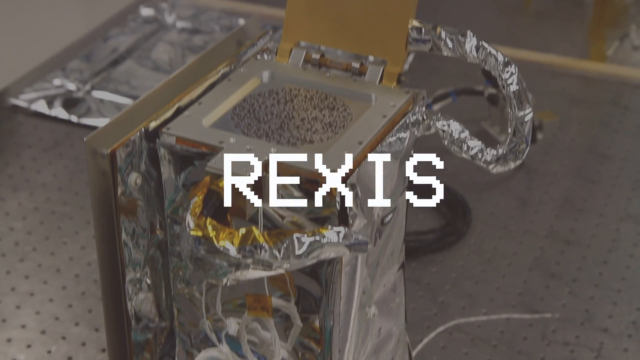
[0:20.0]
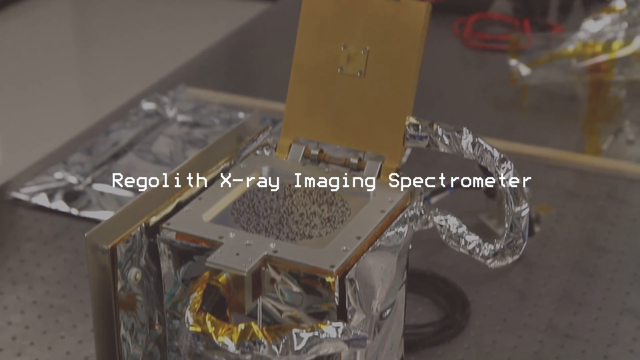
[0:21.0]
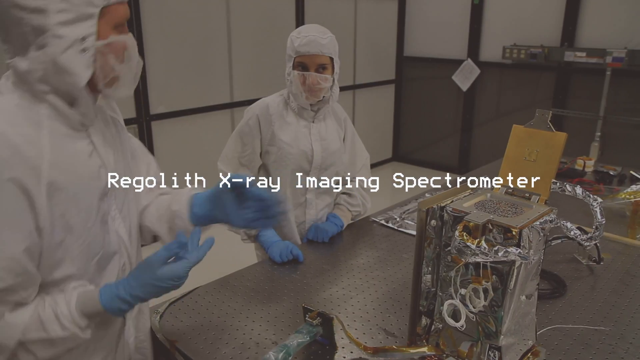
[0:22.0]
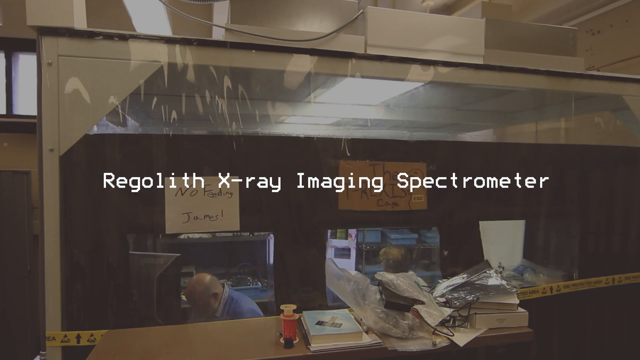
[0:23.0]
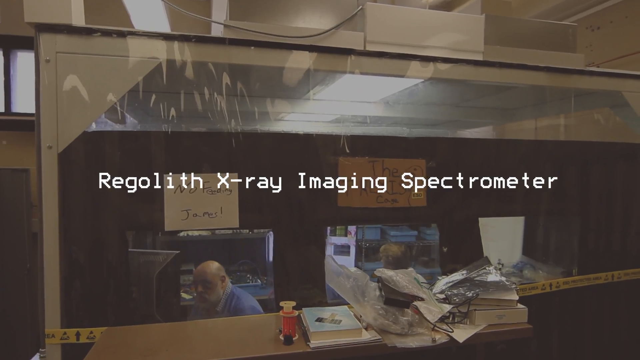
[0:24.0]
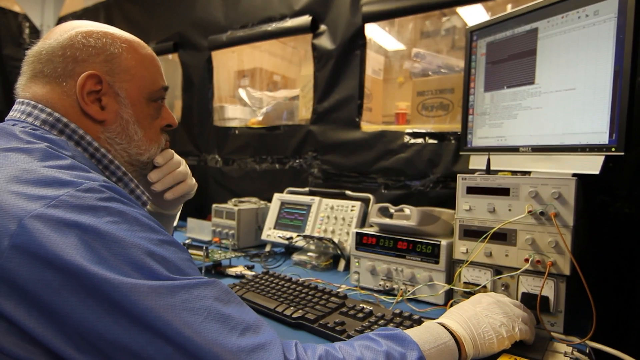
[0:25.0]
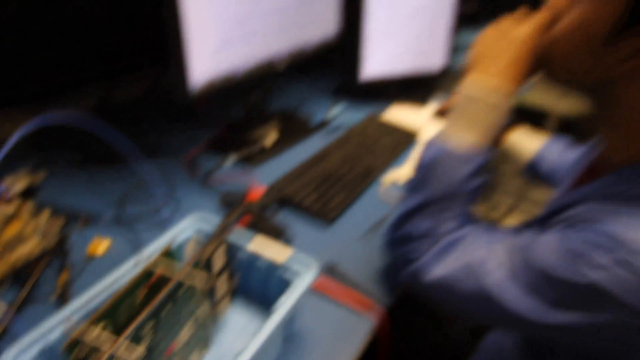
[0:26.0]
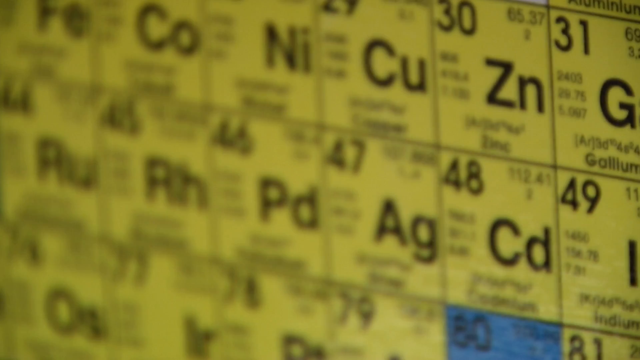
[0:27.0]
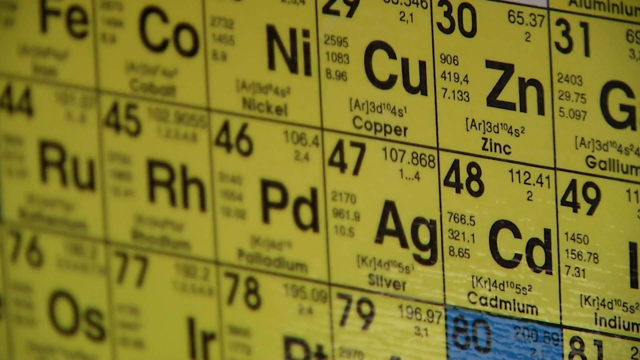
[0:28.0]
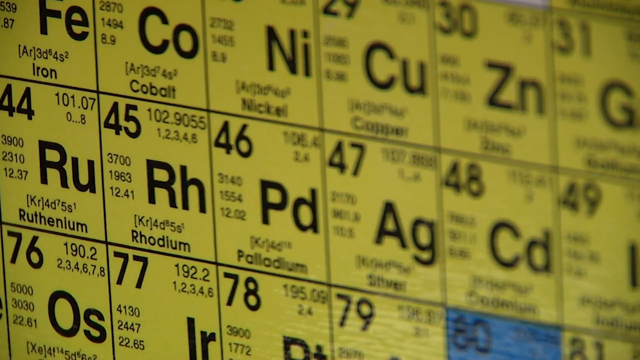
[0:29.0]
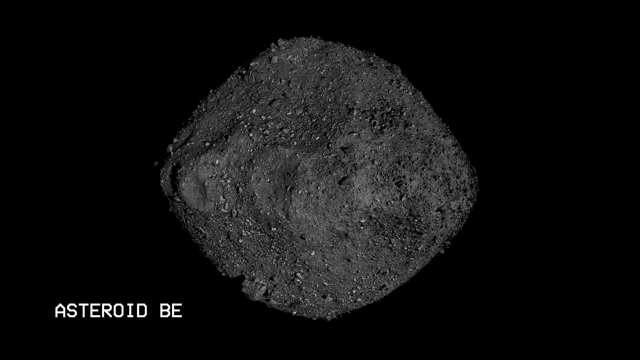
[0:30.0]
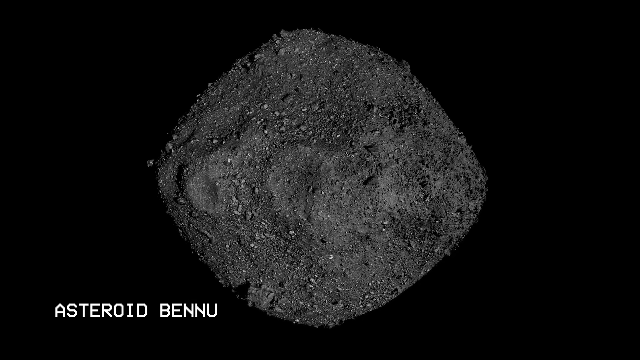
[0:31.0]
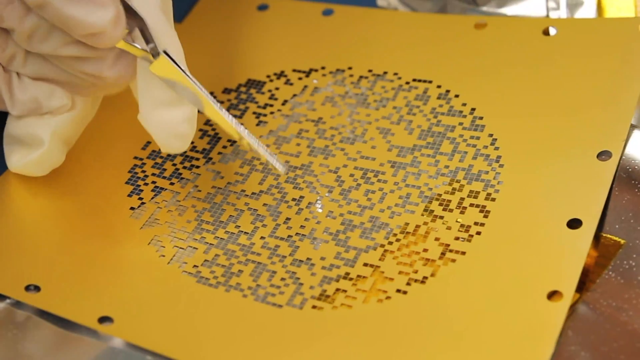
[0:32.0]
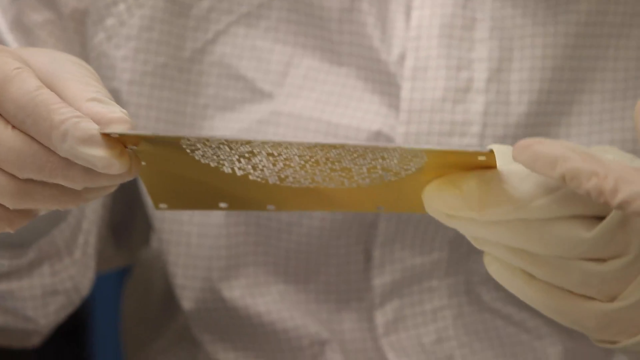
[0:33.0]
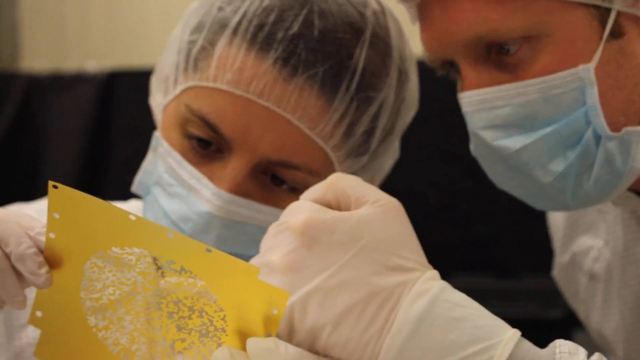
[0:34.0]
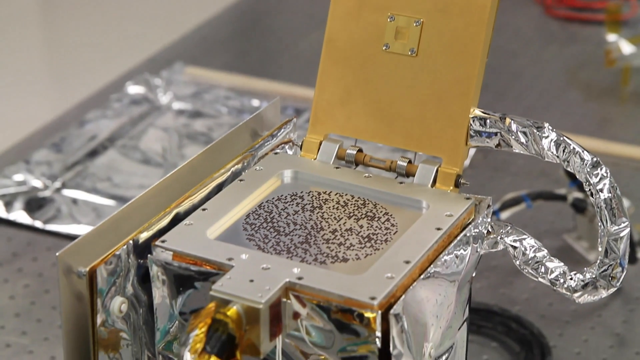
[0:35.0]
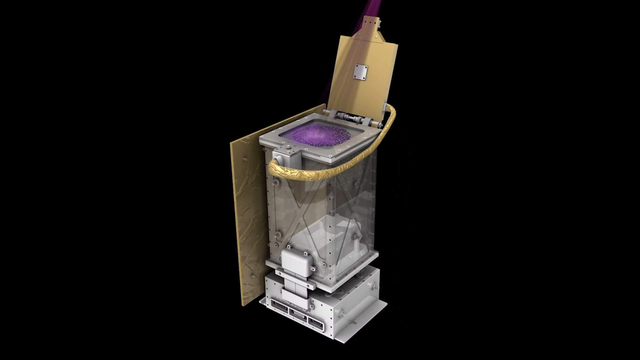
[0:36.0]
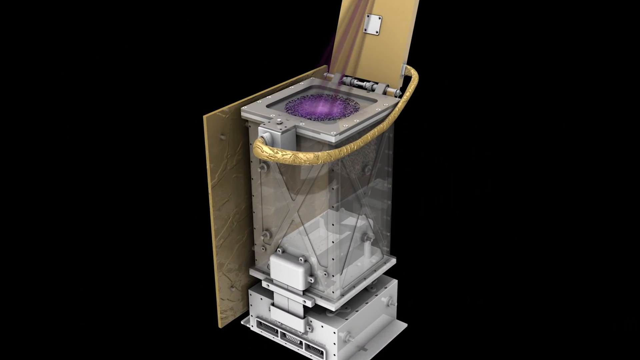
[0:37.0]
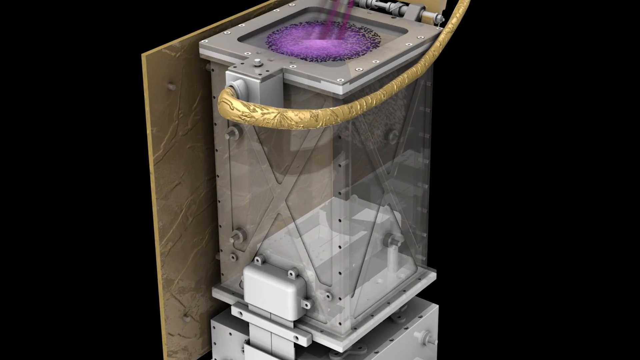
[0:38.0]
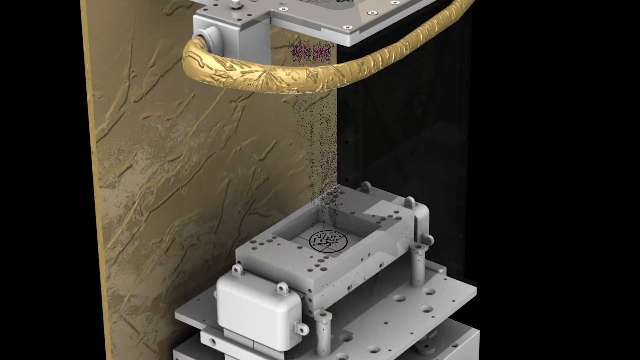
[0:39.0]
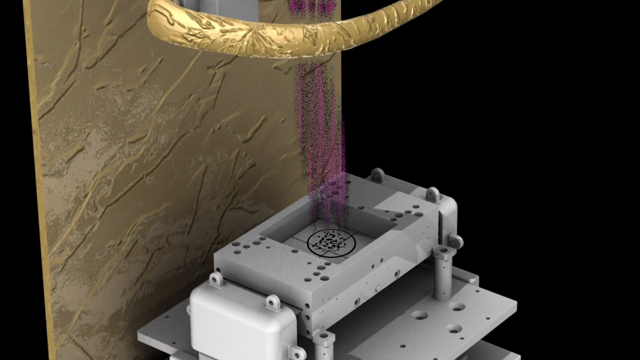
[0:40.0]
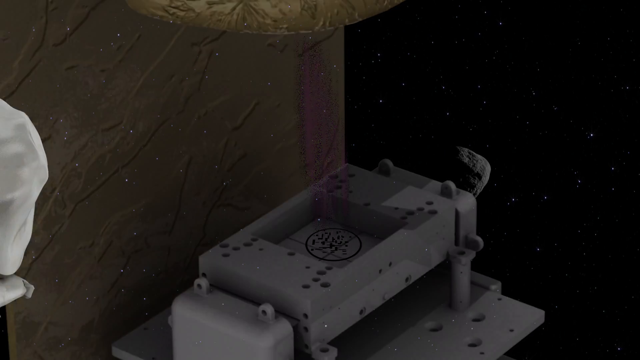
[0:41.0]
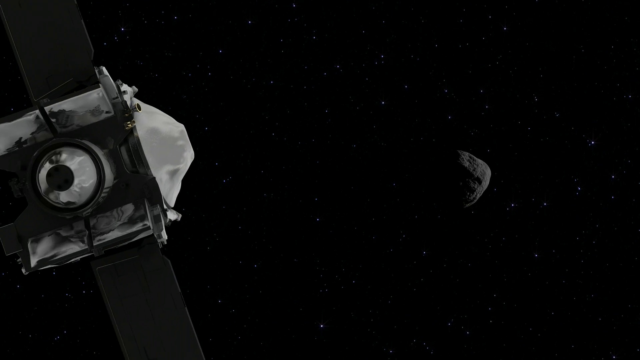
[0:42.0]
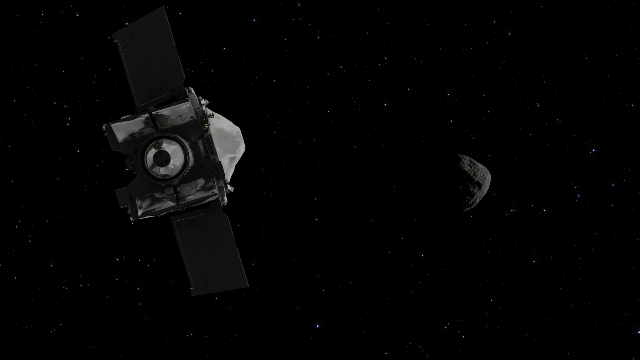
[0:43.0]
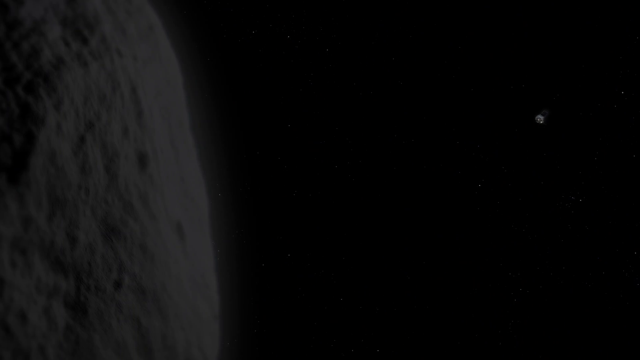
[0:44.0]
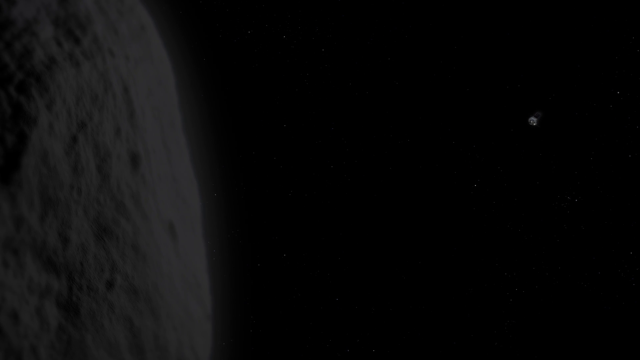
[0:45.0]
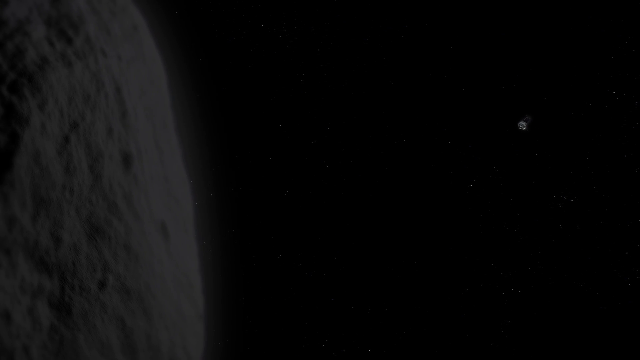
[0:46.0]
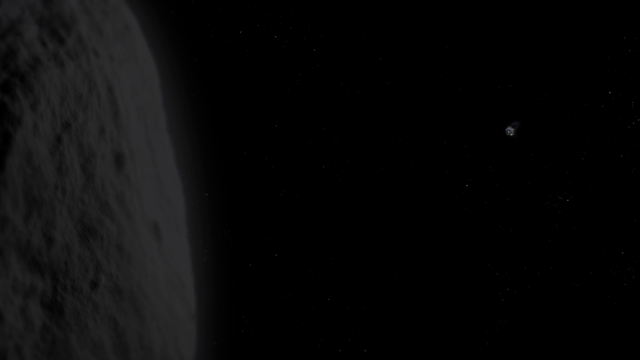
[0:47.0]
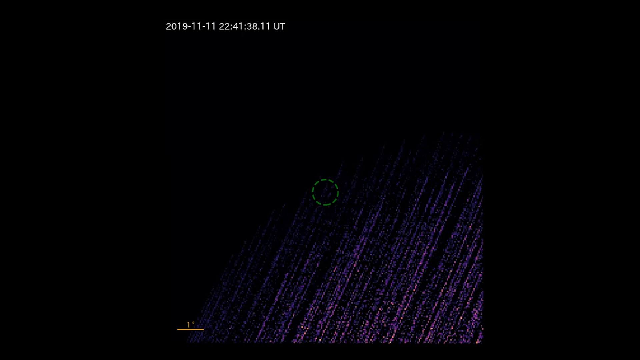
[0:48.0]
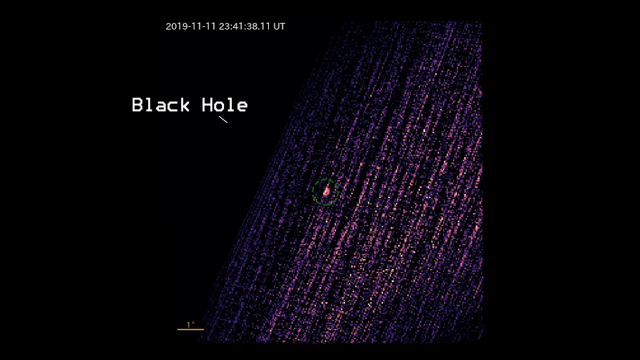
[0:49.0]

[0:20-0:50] Images of the Rexis show a tall, square-shaped container with an open lid and what looks like small balls inside. The container is covered in silver and gold foil, and a title appears: "Regolith X-ray Imaging Spectrometer". Two people in white overalls, blue gloves and masks stand by it; the man nearest the spectrometer points towards the tall square container with the silver and gold foil around it, then holds his hands up as he talks to the woman in white overalls next to him. A cabin inside a larger hall has two people working in it. Inside the cabin, which has plastic windows, a man in blue overalls, a check shirt and white gloves works at a laptop and screen. A blue container with a computer board inserted is next to a man in blue overalls working at a desk, looking pensively at a screen. A close-up of a periodic table shows Palladium in the centre. Next is an image of the asteroid Bennu, its uneven surface rotating to show depressions and rocks. A scientist working with a pair of pincers looks at a piece of card with pixelated silver impressions in a circular shape; a woman scientist folds it up while a male scientist points to various sections. A picture then shows the tall square container without the silver foil surround. The view moves close up, showing gold hose coming out of the side; the contents look purple, then change to tiny pixel-like dots that begin forming and travelling down, forming at the base of the piece of equipment. Another picture shows the satellite moving towards the strange asteroid.